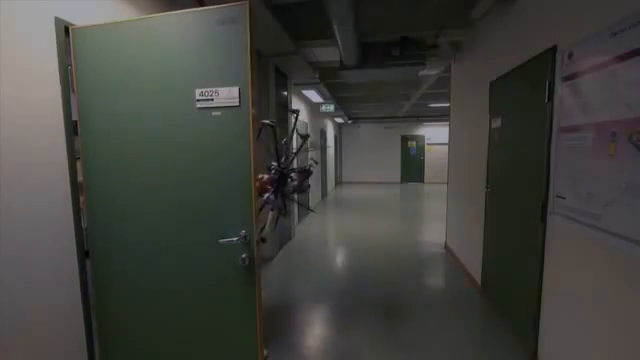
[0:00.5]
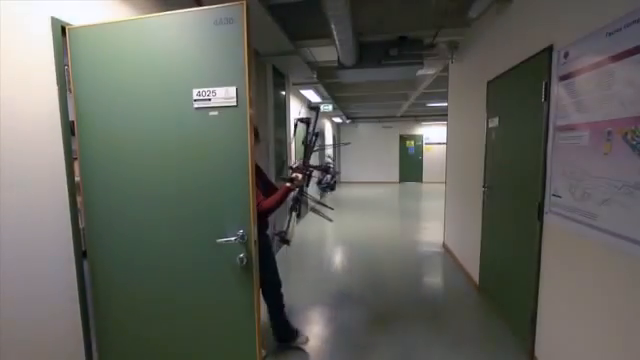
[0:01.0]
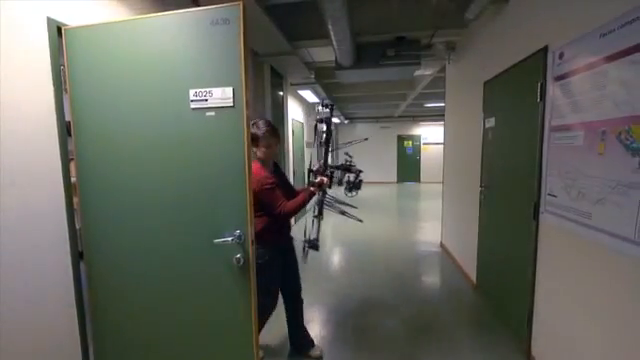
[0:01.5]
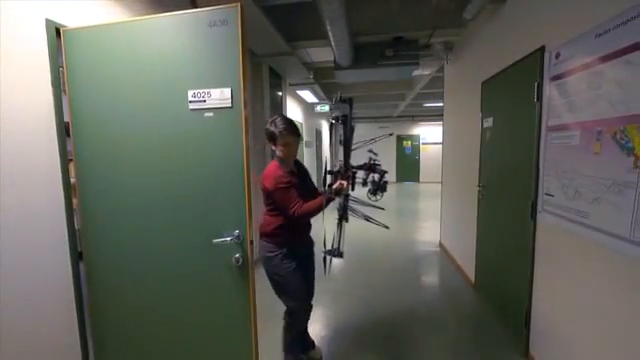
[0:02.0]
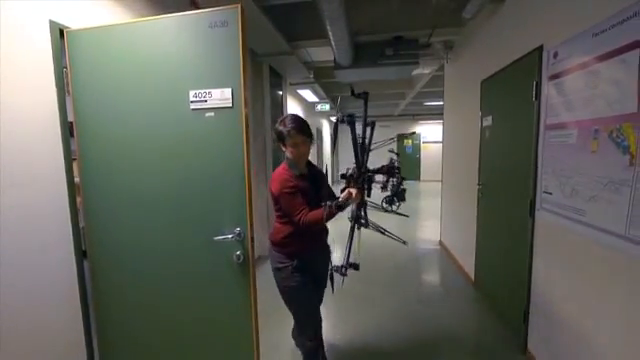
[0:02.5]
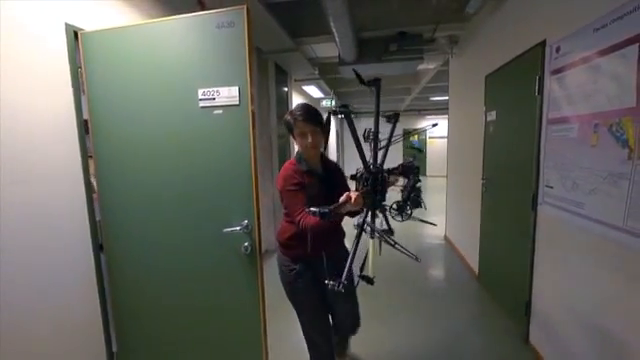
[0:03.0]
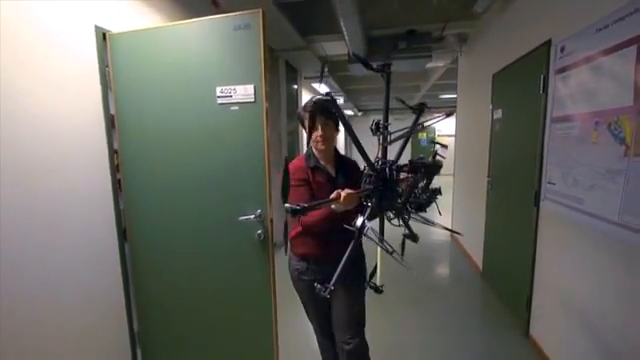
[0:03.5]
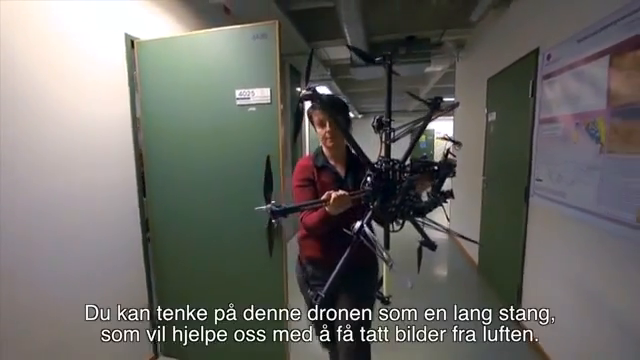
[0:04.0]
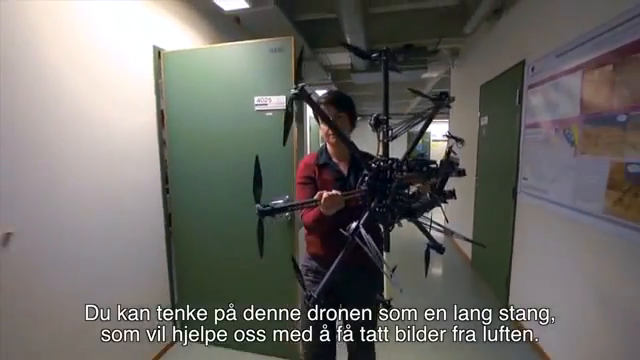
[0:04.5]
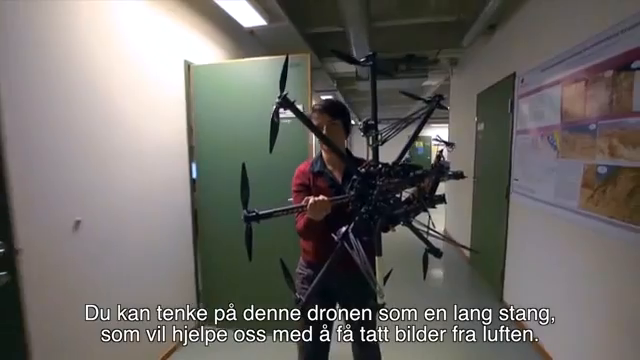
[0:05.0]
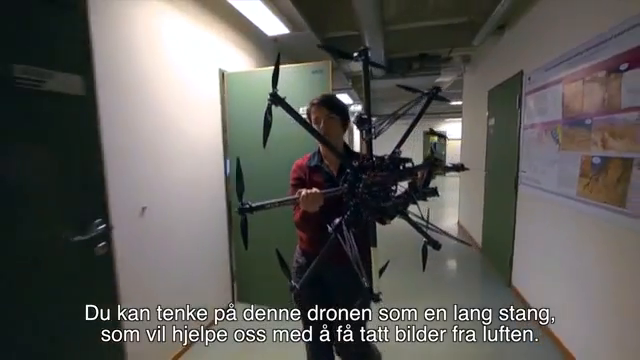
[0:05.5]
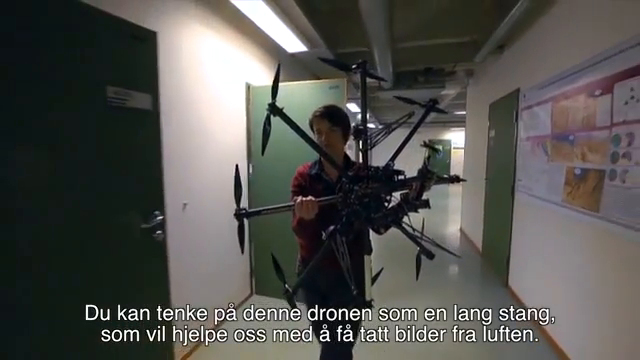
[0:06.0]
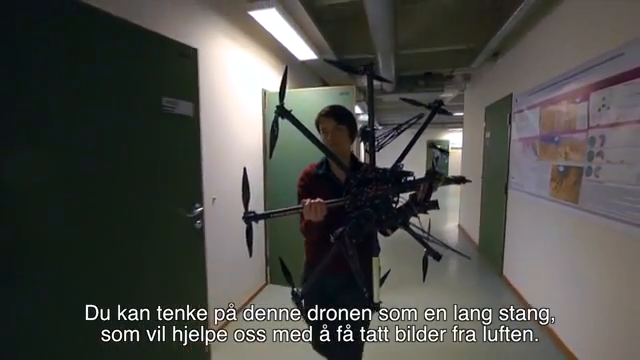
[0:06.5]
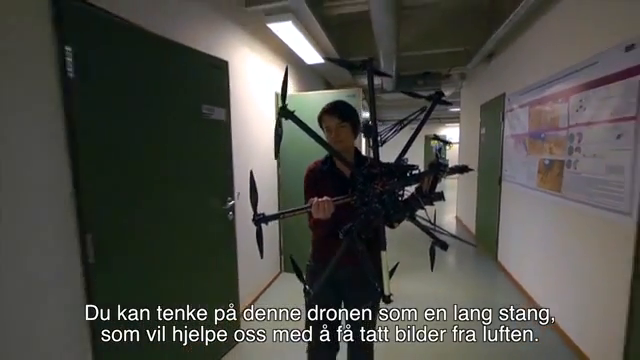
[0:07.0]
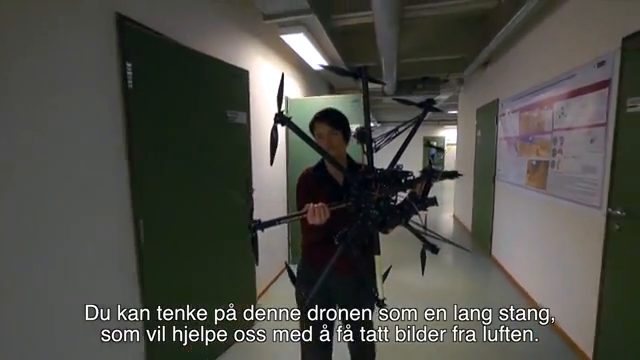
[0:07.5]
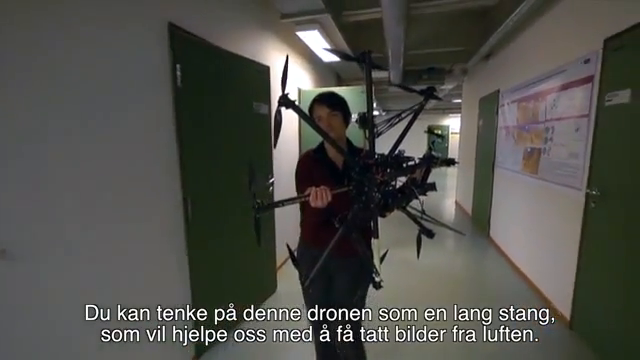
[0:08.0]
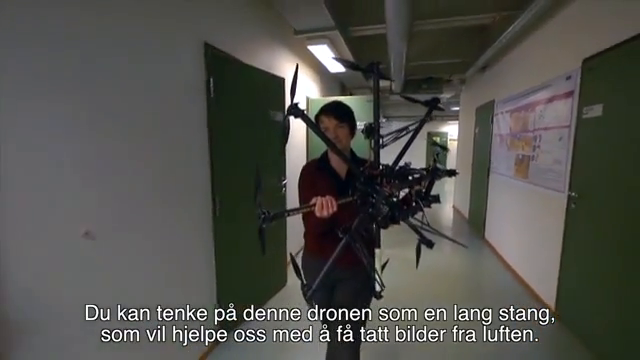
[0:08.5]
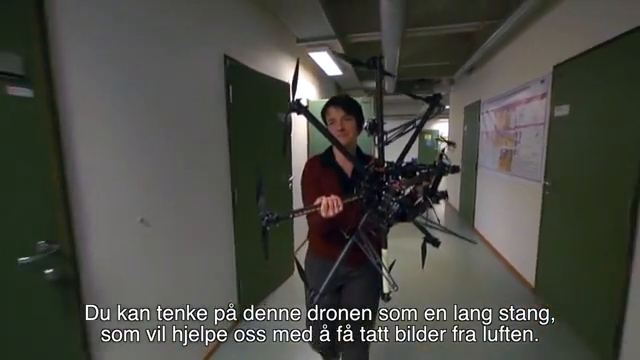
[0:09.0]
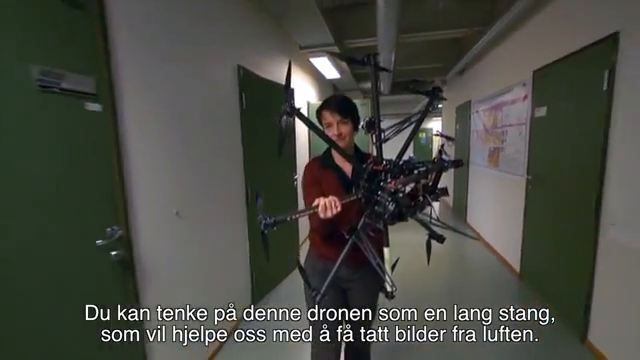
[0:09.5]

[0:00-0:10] Inside a building, a man walks out of an open green door holding a black drone helicopter that is about half his size. He walks down the hallway toward the camera recording him, in what looks almost like slow motion, holding the drone as he goes. He wears a red shirt with a collar and a pair of gray pants. As he walks, he passes four more closed green doors. The setting stays inside the building and does not change as he walks.